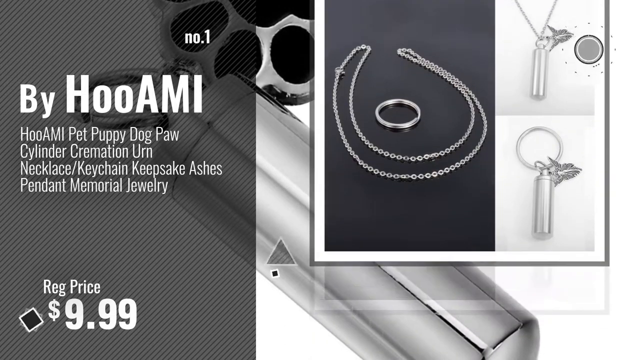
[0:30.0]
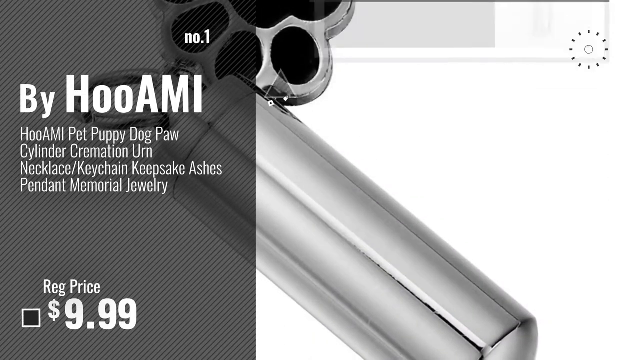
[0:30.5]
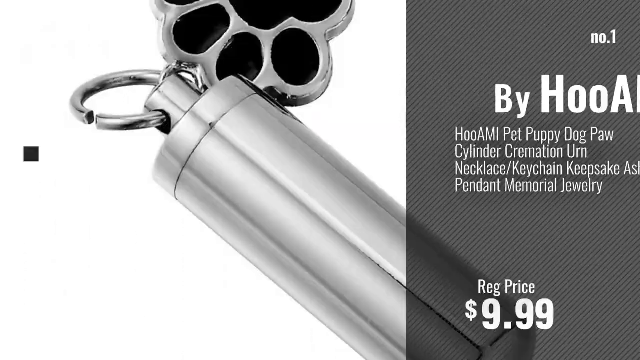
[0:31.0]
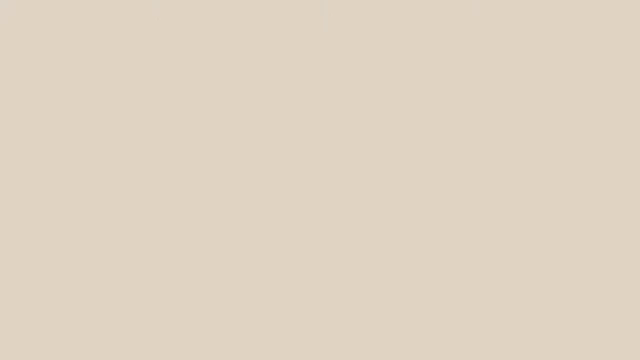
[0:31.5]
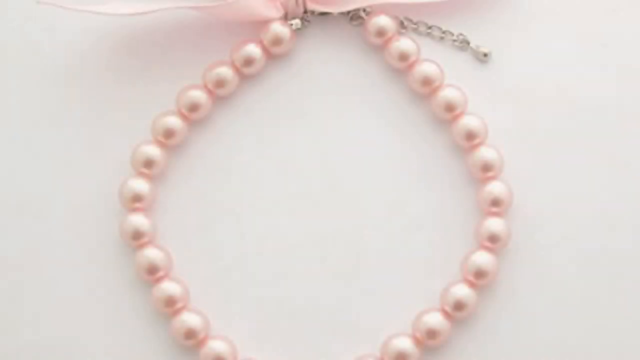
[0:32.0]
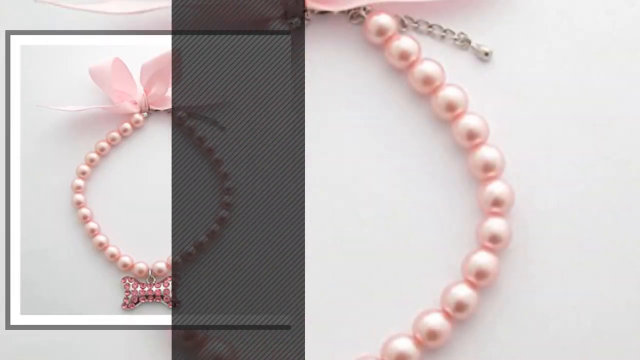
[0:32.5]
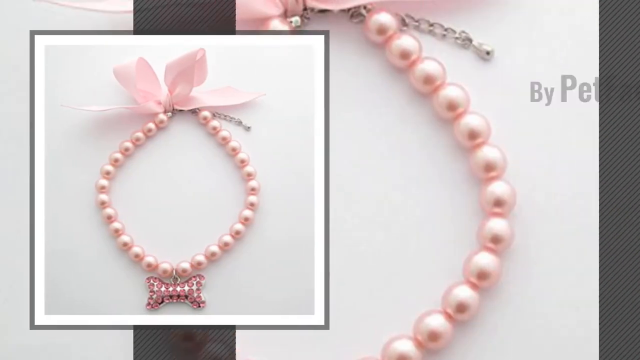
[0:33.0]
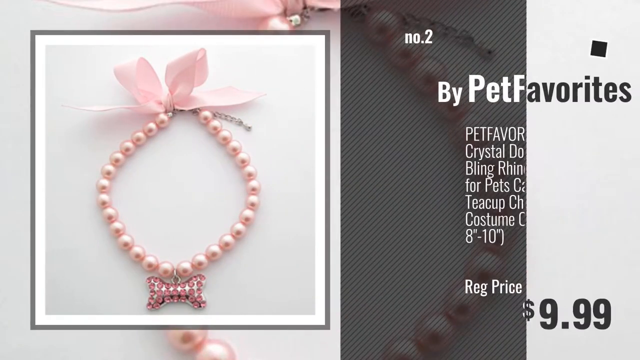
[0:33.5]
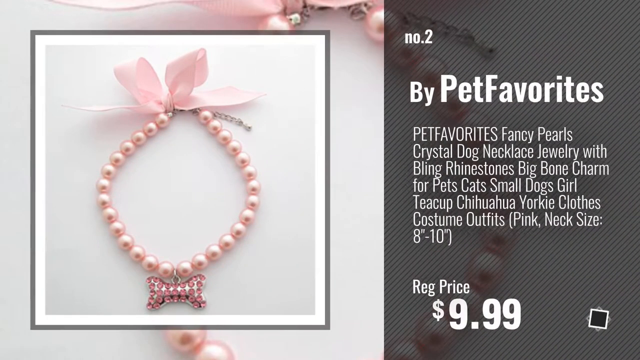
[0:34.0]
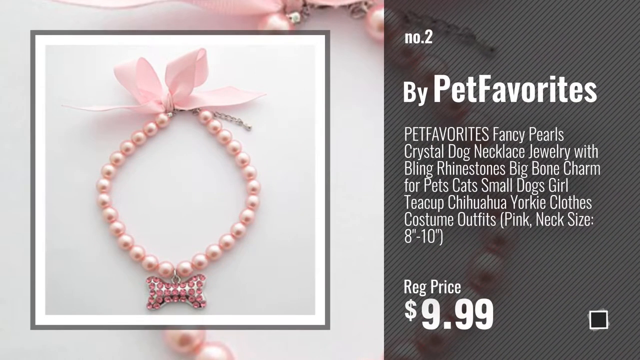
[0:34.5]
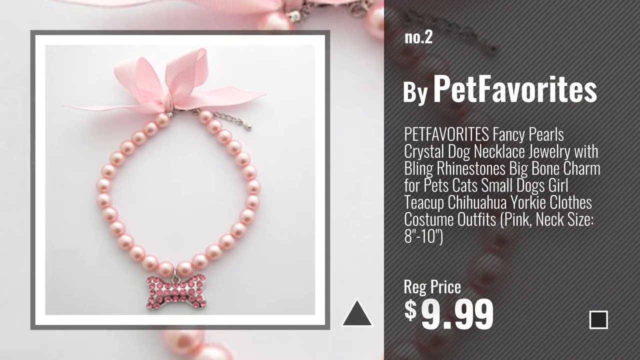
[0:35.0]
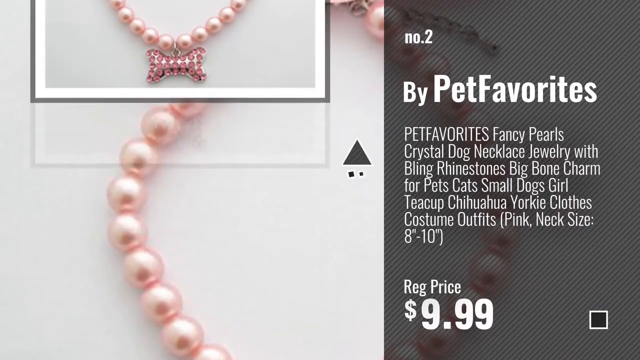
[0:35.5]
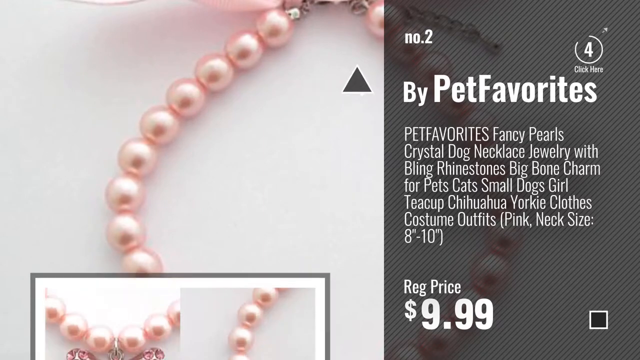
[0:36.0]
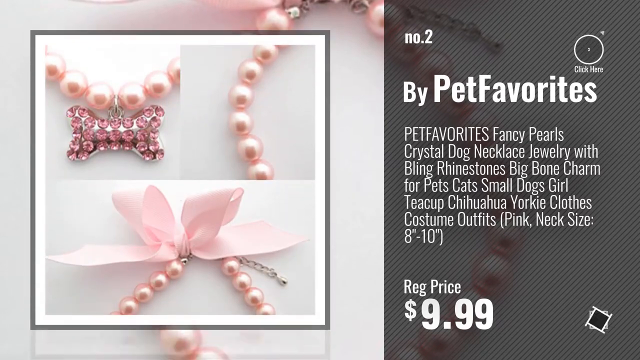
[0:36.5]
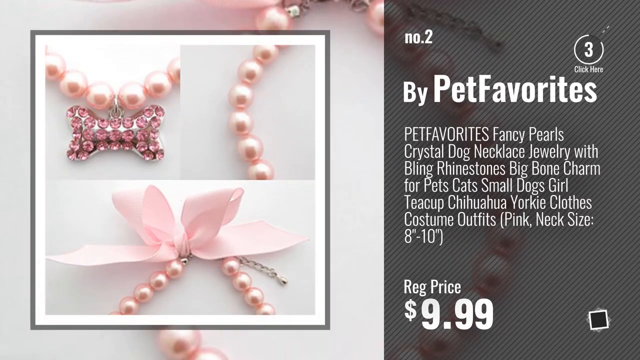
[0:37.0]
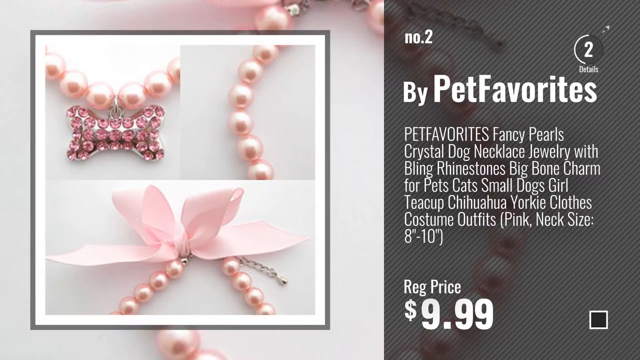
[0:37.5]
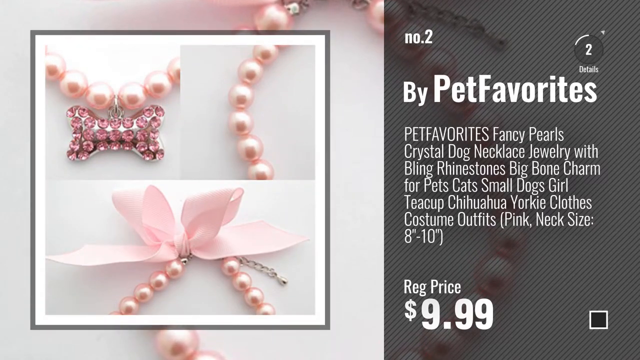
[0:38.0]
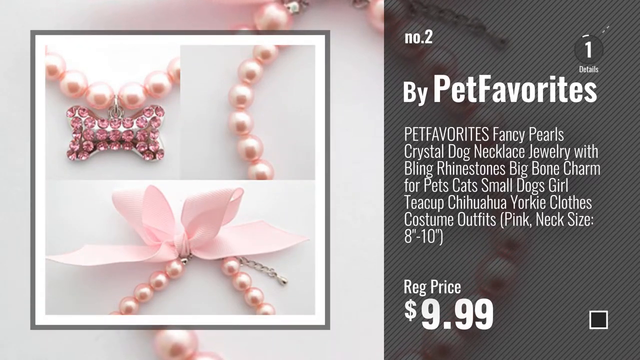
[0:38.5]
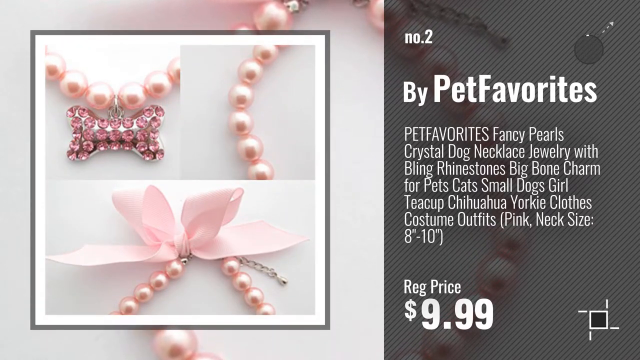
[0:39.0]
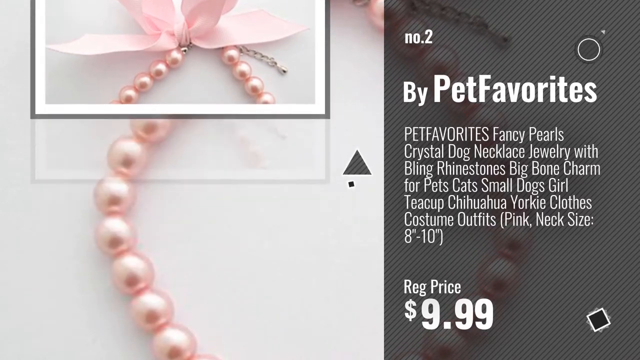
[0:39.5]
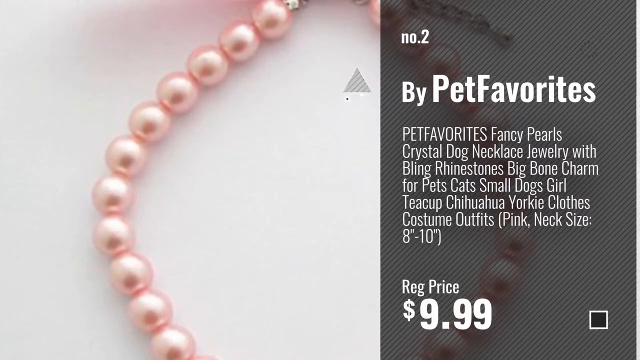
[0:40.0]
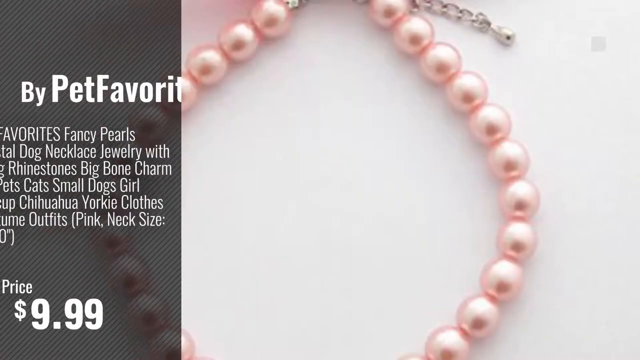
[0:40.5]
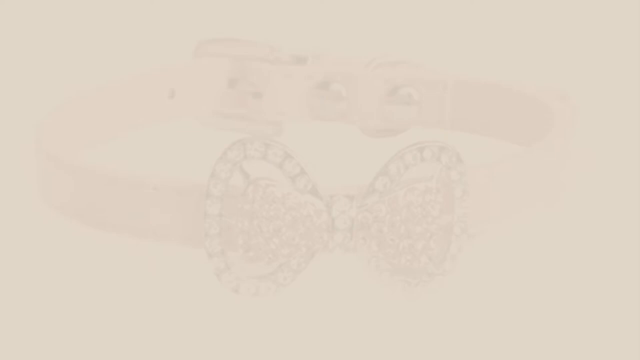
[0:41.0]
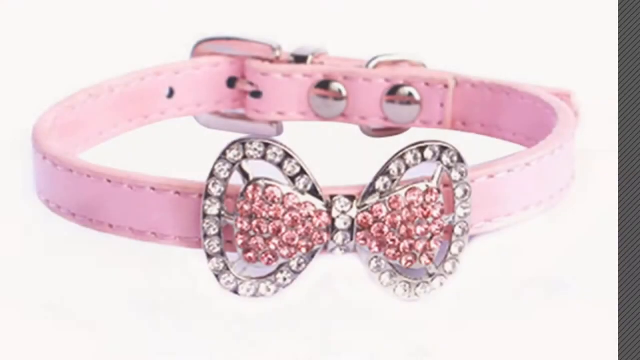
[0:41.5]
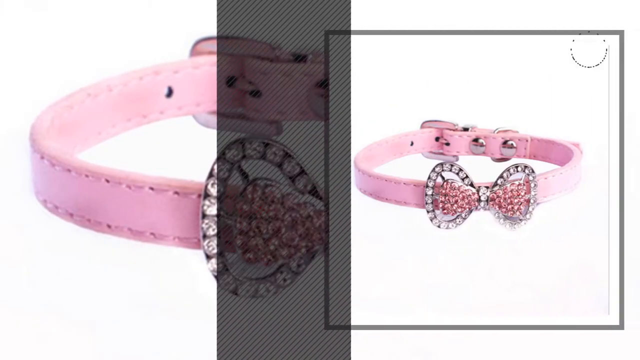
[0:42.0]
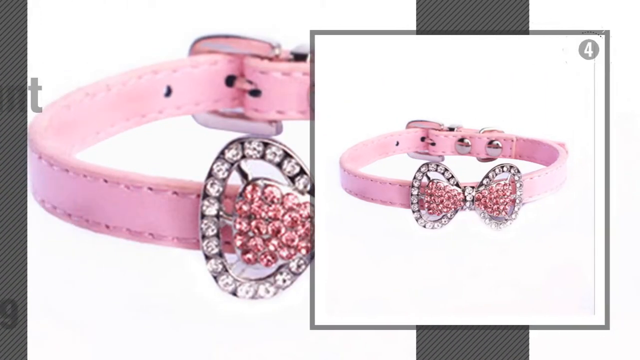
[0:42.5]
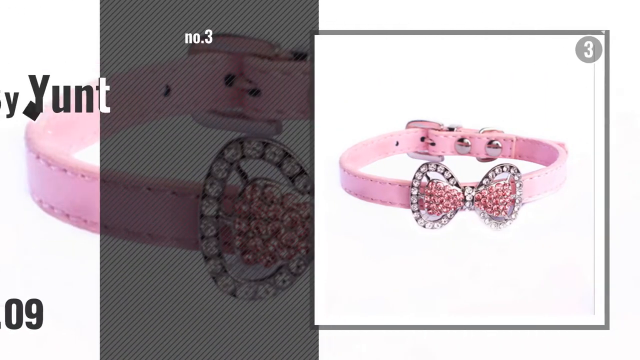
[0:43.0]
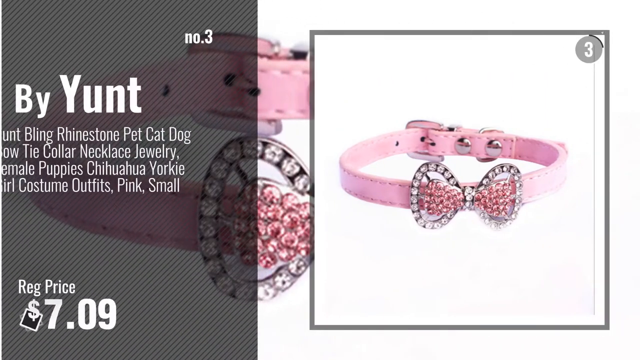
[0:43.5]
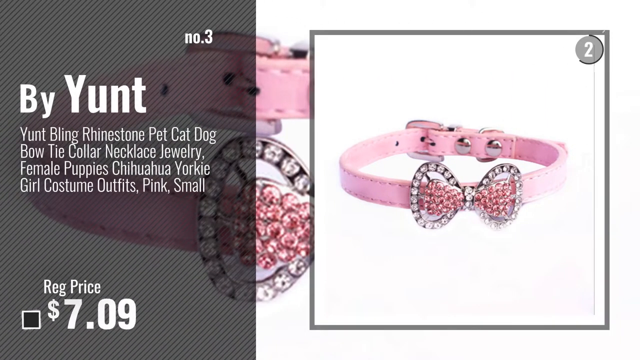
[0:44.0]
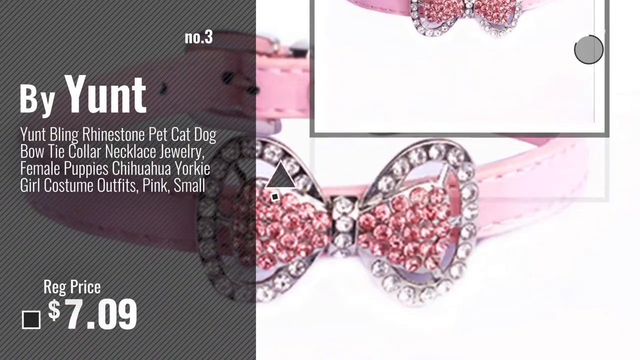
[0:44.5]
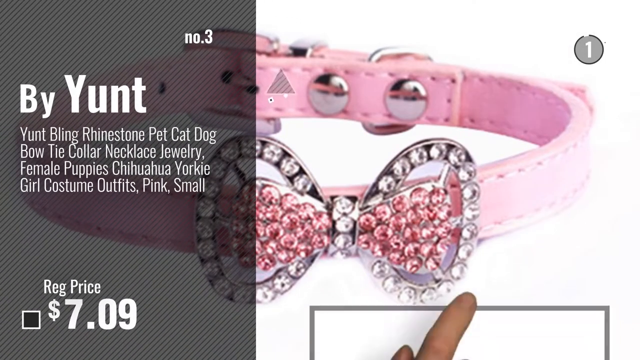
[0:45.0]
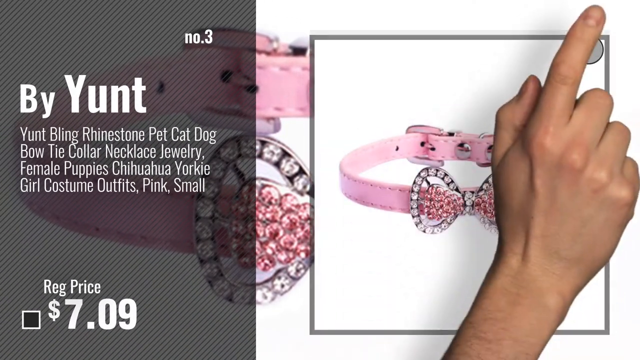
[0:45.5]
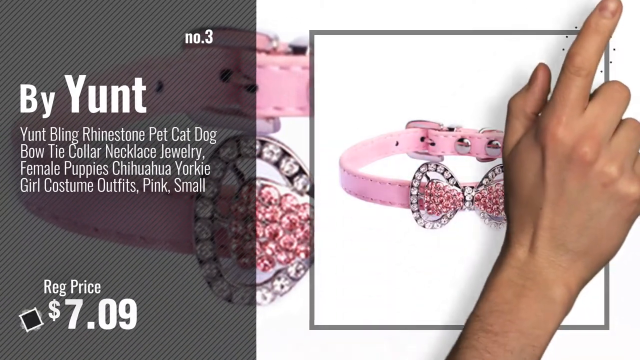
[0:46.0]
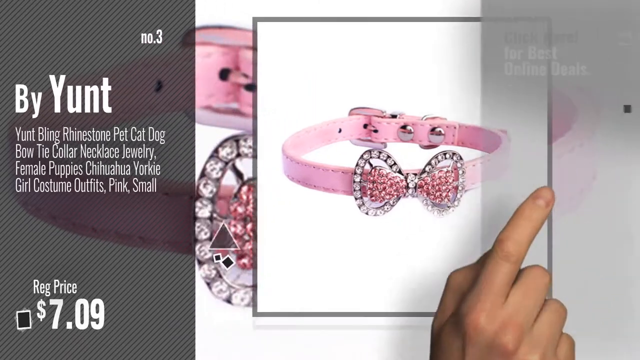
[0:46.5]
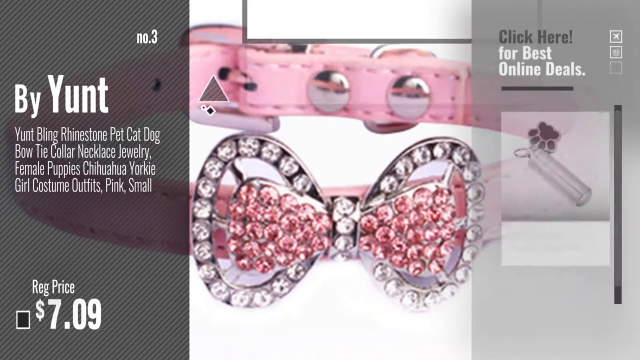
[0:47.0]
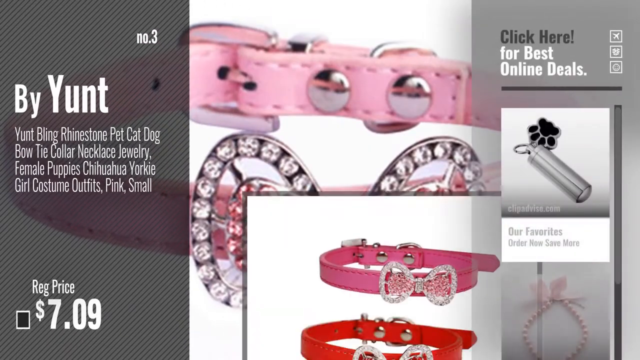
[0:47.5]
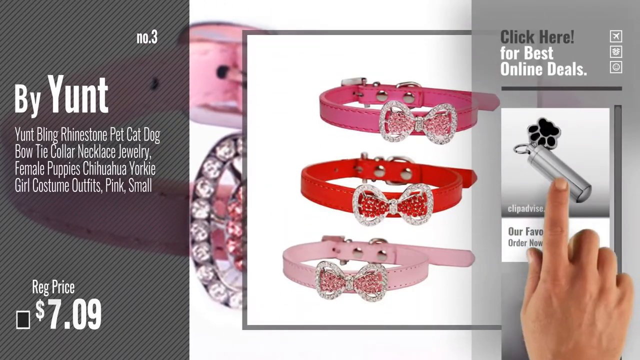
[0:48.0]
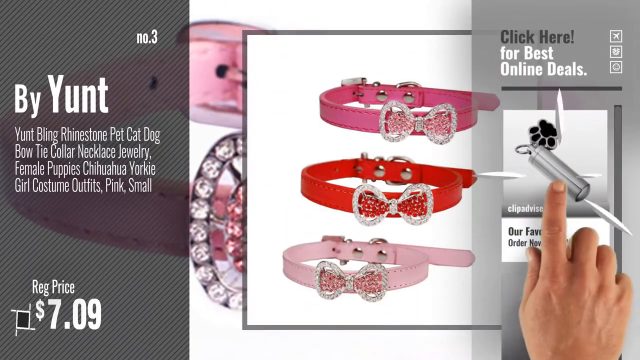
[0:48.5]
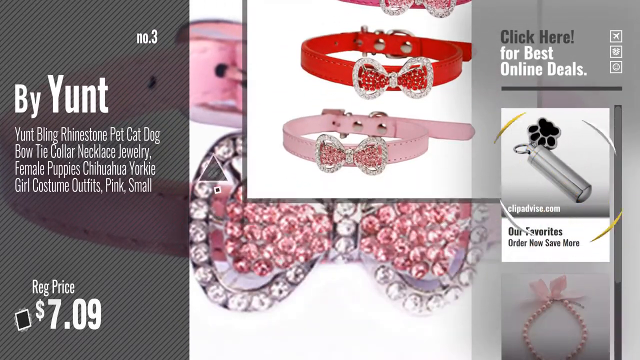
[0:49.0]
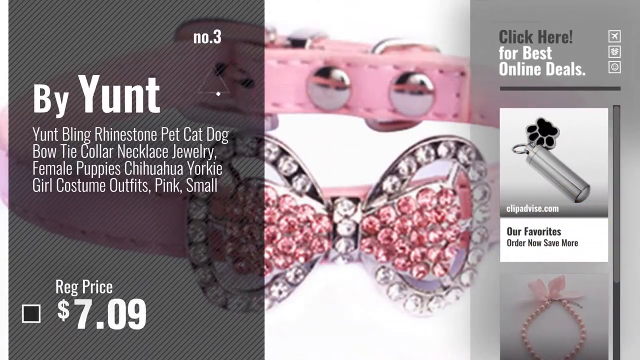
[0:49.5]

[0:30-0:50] Jewellery by Hooami is displayed: a Pet Puppy Dog Paw Cylinder Cremation Urn Necklace Keychain Keepsake Ashes Pendant Memorial Jewellery. It is a small pendant with a dog paw motif attached to it; the pendant is a small canister suitable for keeping pet puppy or dog ashes in. The regular price of the item is £9.99. These images disappear and a pink pearl necklace appears. It has a bone pendant with pink diamantes and is tied at the back with a pink ribbon. Its caption reads "by Pet Favourites. Fancy pearls crystal dog necklace jewellery with bling rhinestones big bone charm for pet cats small dogs girl teacup chihuahua yorkie clothes costume outfit pink", with a neck size of 8 to 10 inches and a regular price of £9.99. Close-up images of the item, including the charm and the back ribbon, come up from the bottom of the screen.